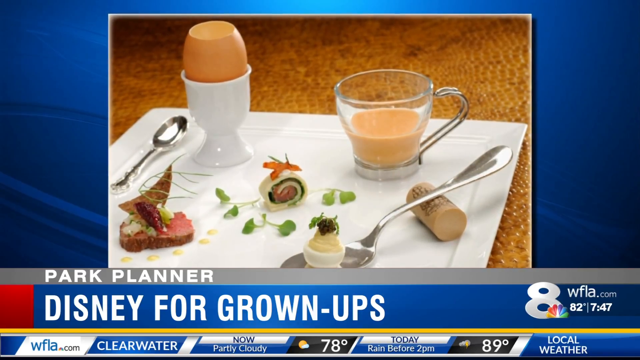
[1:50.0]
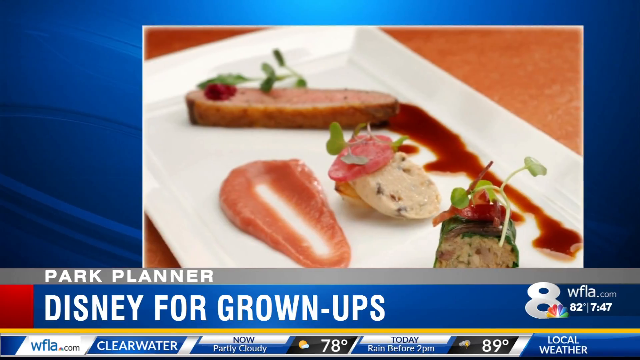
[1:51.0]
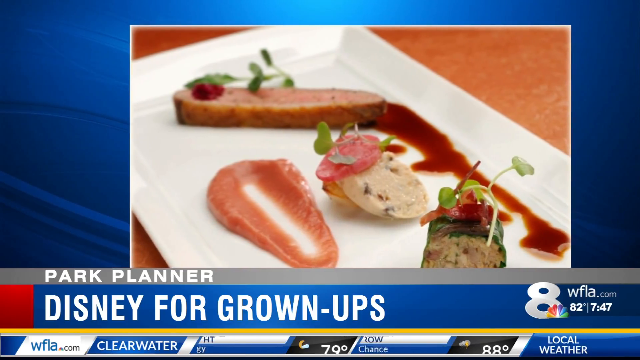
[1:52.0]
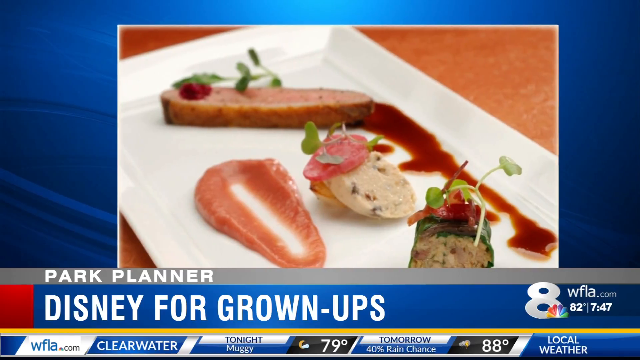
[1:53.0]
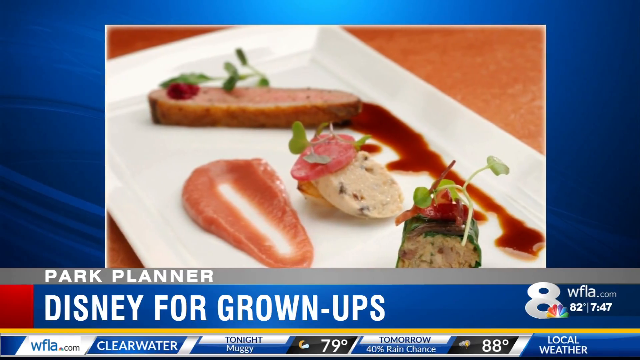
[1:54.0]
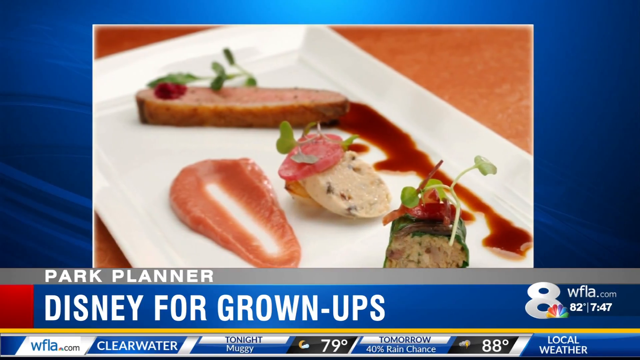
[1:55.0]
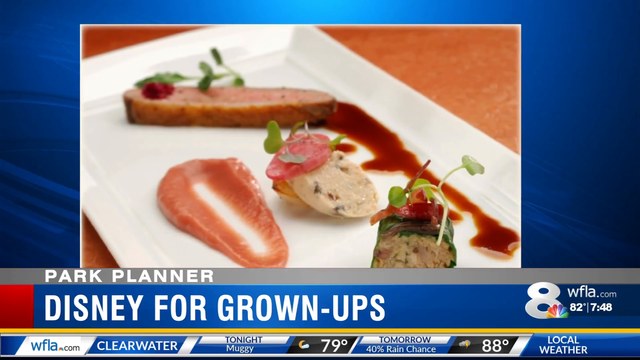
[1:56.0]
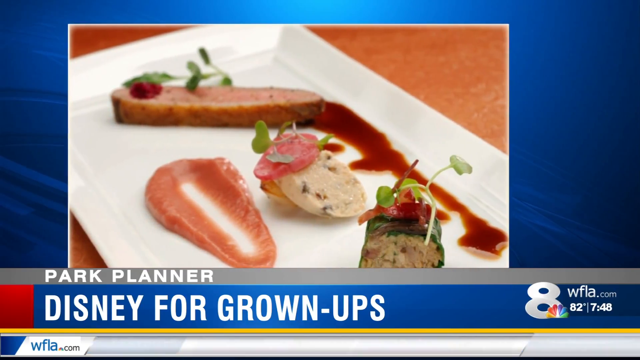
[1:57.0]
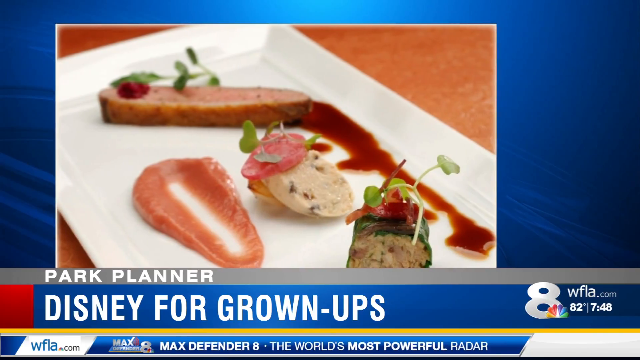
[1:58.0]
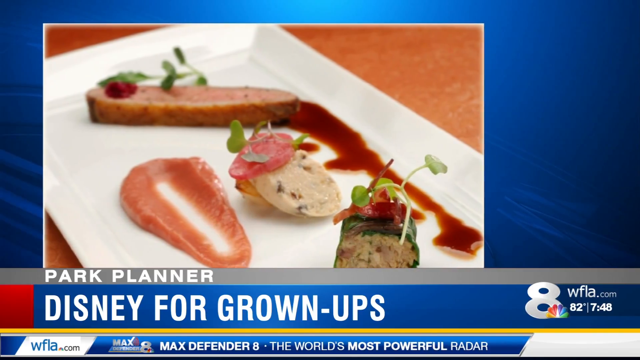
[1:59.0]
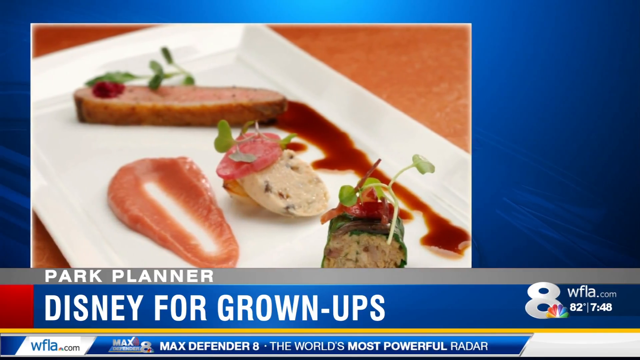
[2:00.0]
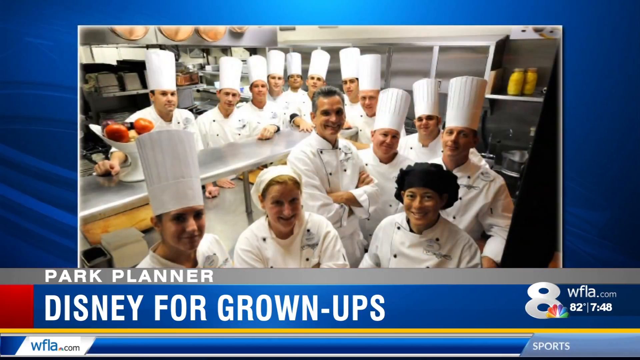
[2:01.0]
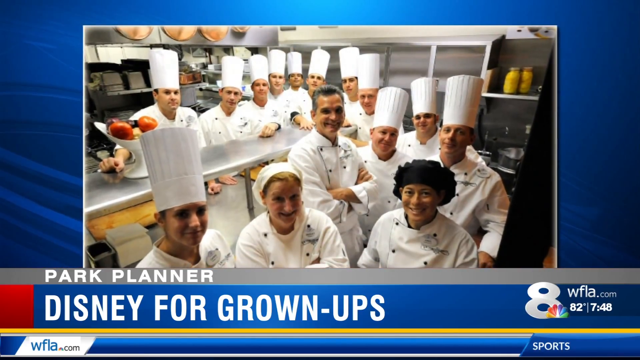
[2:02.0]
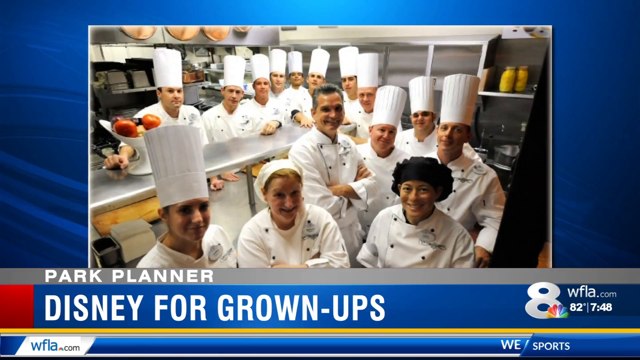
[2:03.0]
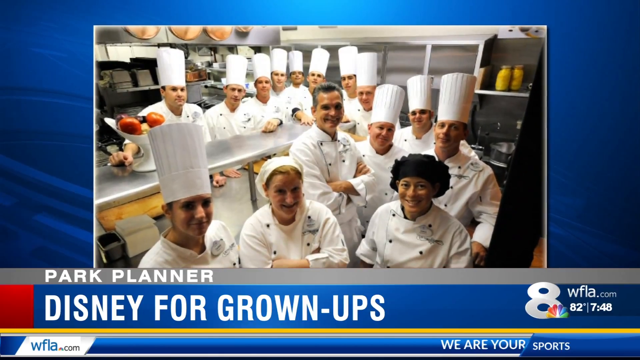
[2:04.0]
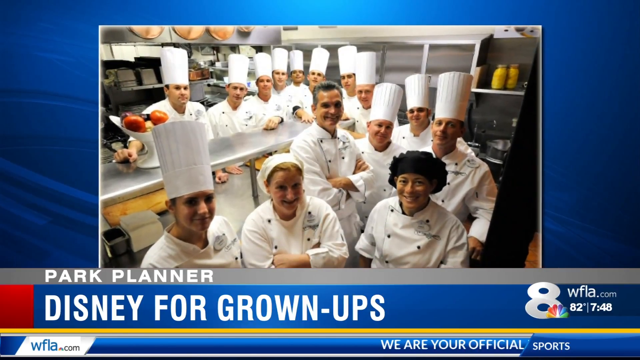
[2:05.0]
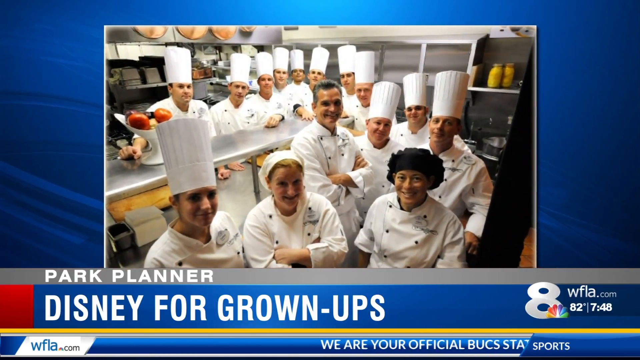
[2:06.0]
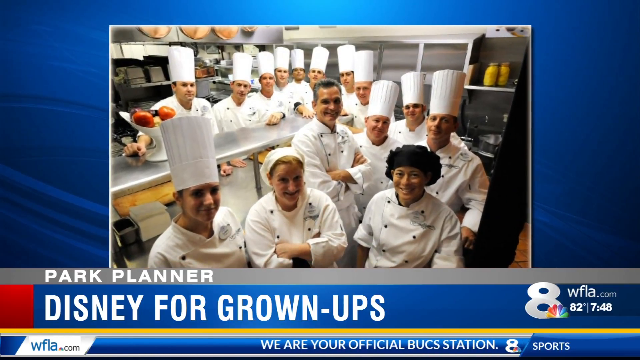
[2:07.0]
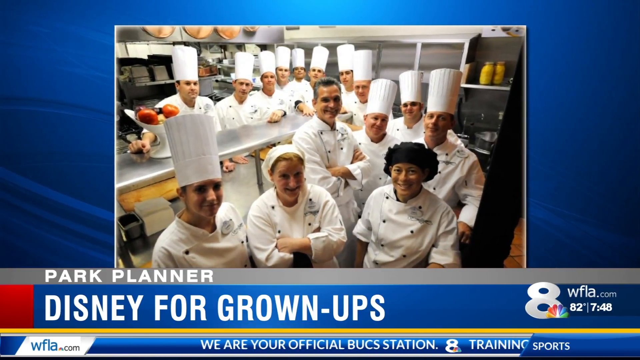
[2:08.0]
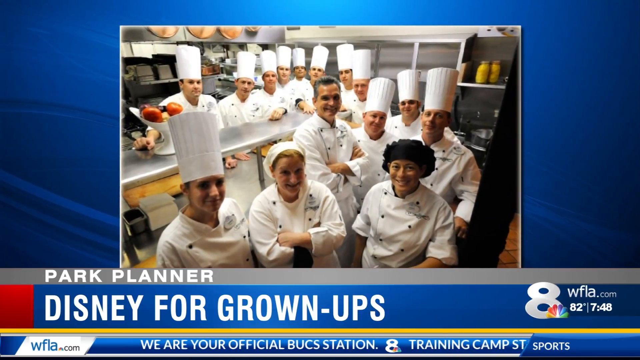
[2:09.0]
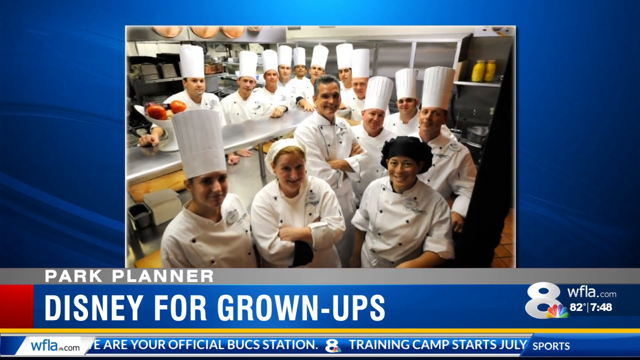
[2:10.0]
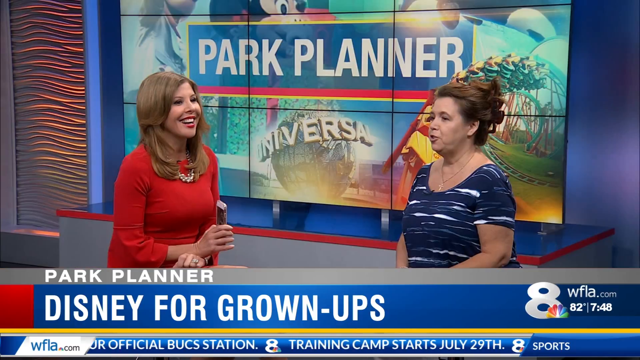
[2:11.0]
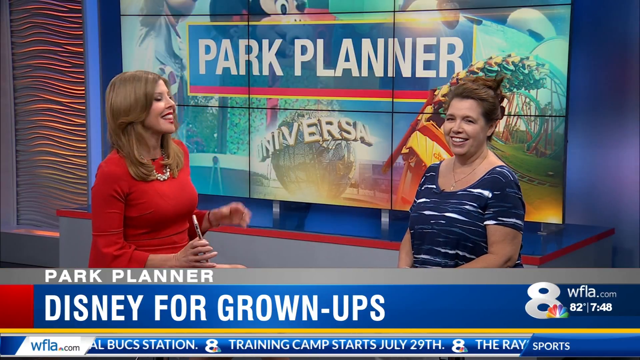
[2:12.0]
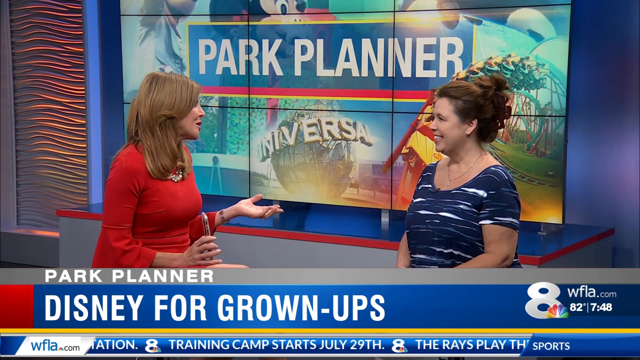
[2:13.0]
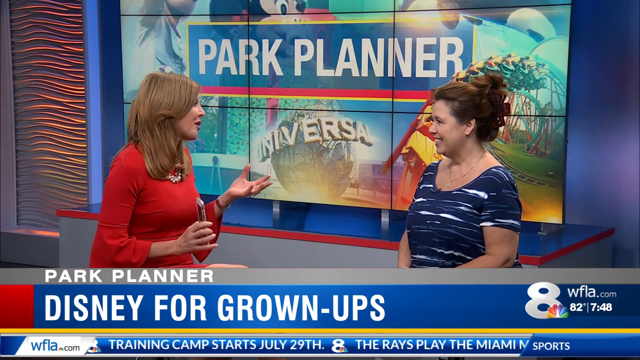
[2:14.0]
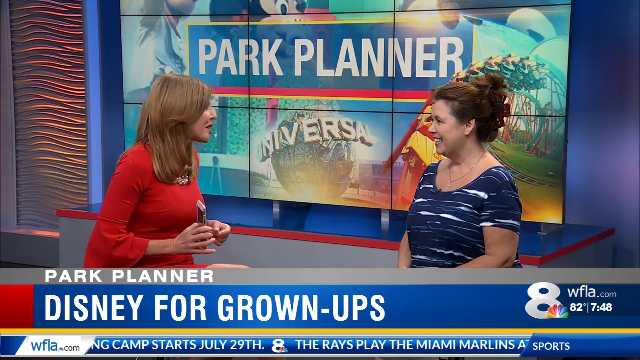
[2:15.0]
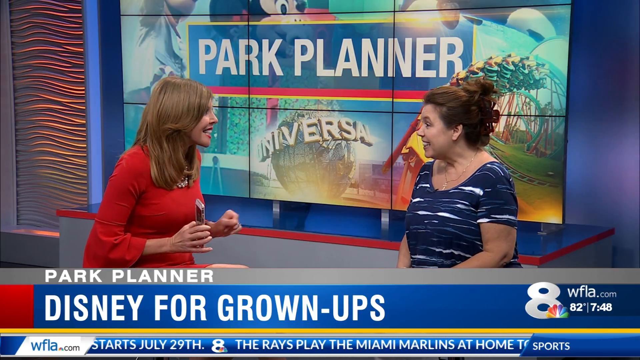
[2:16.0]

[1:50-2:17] The same photograph of bizarre-looking foods and a drink is on screen, then it transitions to another white plate of food. In the foreground is a sushi-roll-looking item; in the middle are two other types of small handheld bites, the left one appearing to be perhaps some sort of raw fish. On the right side of the plate is a drizzle of some sort of sauce, and at the back of the plate is another small strip of meat with some garnish on it. It is on the same orange table. The photo starts to move slightly out of frame. Next comes a photo of what appears to be 15 chefs and kitchen staff in a kitchen with metallic countertops and some tomatoes in the background; most of them are smiling for the camera. A photograph then appears for just one second, too briefly to make out its content. The video then returns to Gayle and Kathy having a conversation, with Gayle seated on the left and Kathy seated on the right. Kathy looks very excited about something, and both women are smiling.